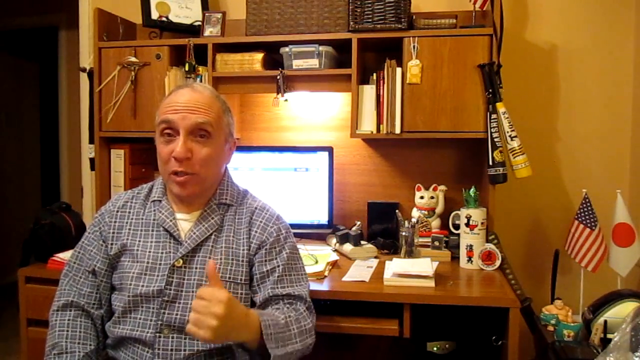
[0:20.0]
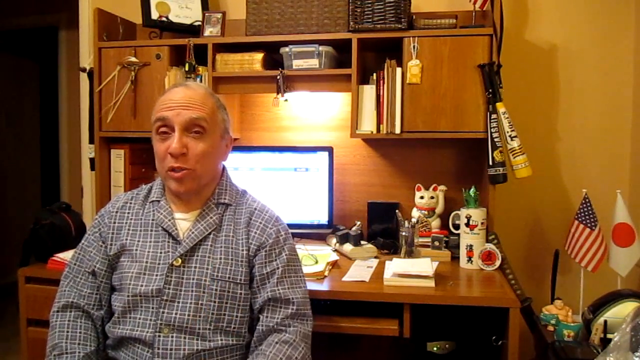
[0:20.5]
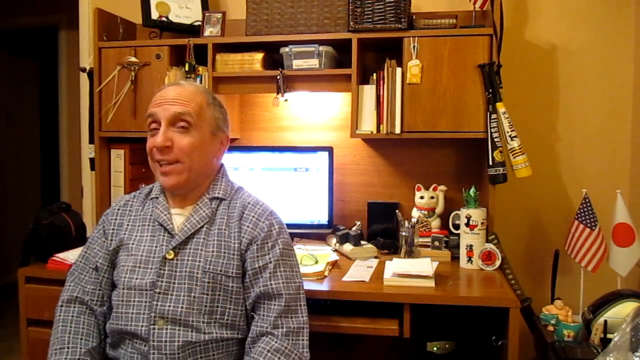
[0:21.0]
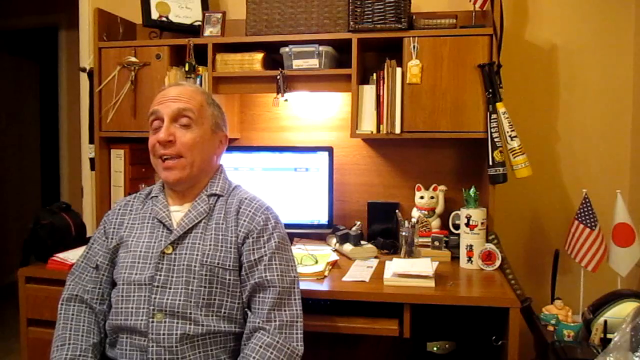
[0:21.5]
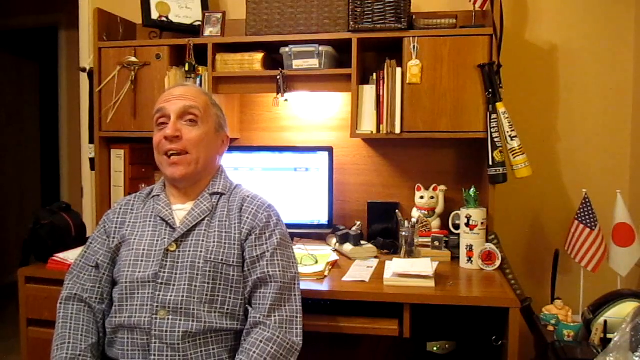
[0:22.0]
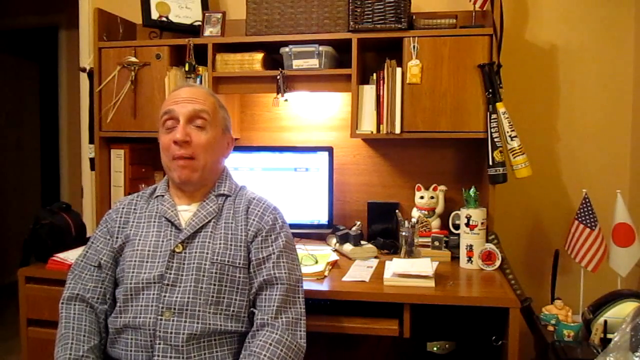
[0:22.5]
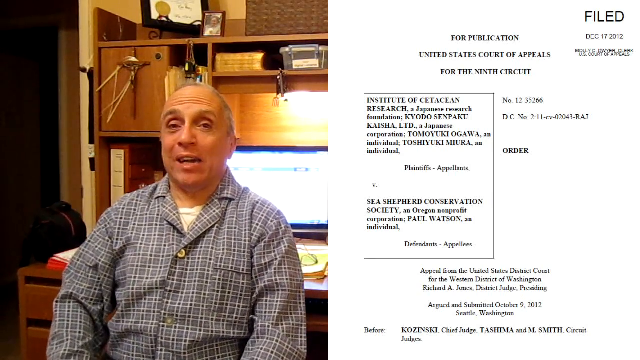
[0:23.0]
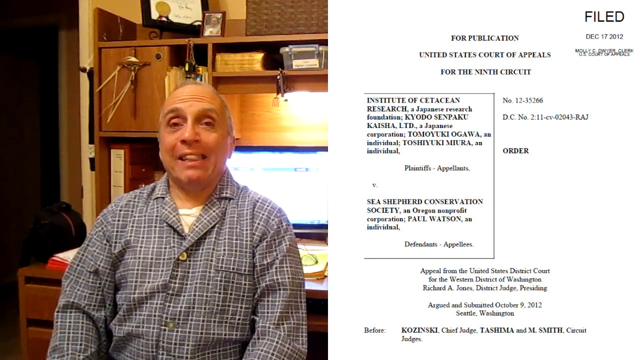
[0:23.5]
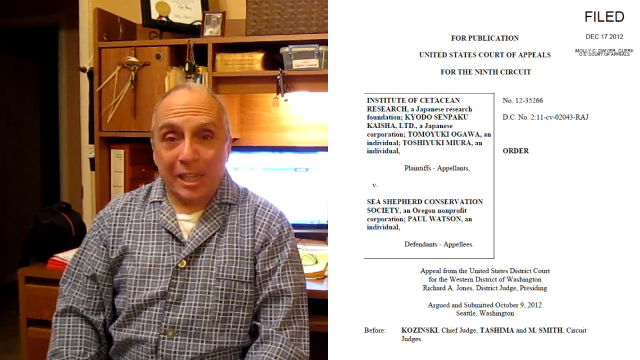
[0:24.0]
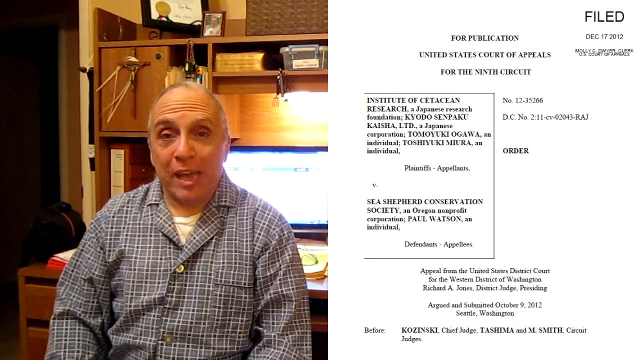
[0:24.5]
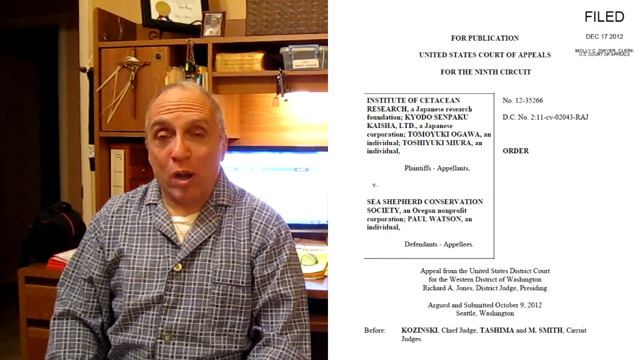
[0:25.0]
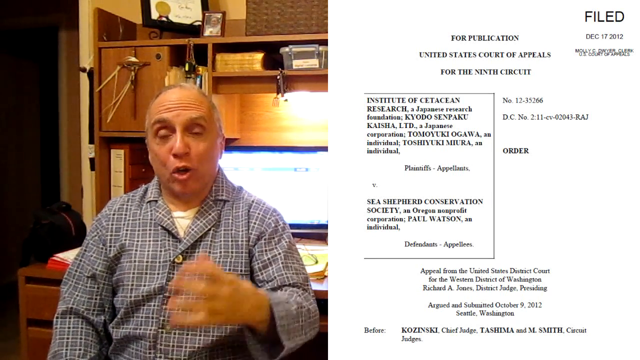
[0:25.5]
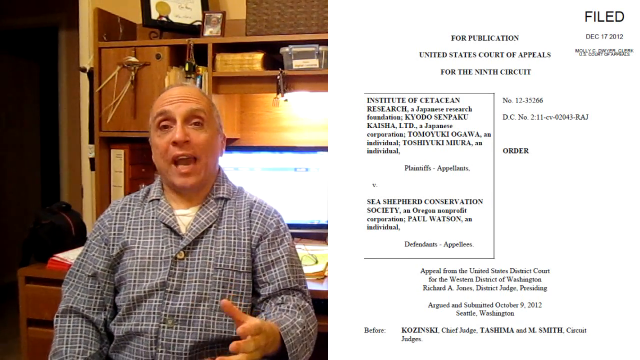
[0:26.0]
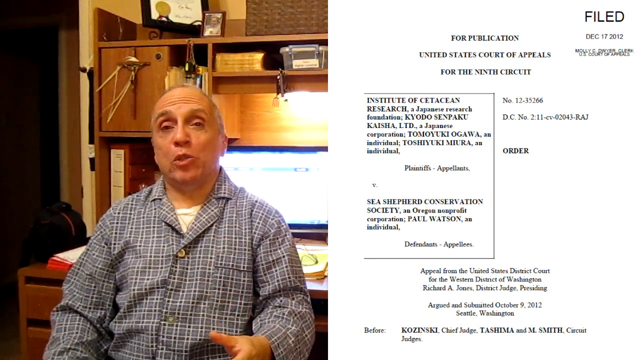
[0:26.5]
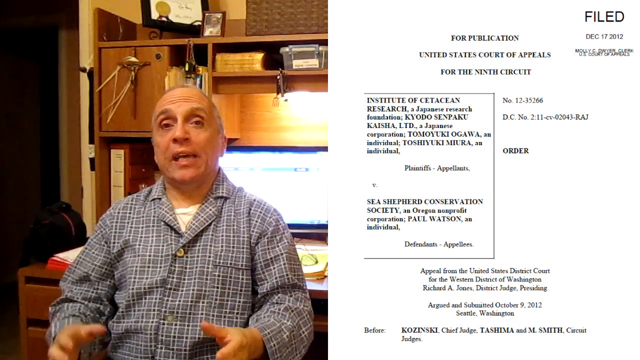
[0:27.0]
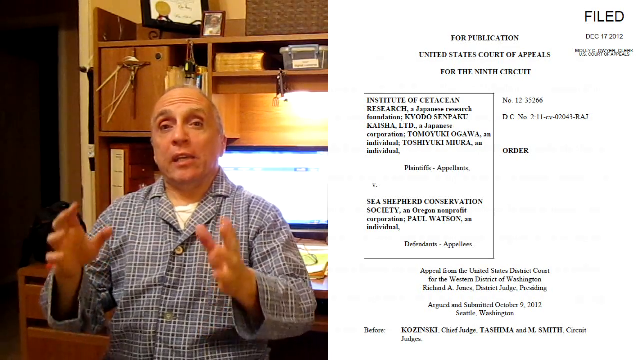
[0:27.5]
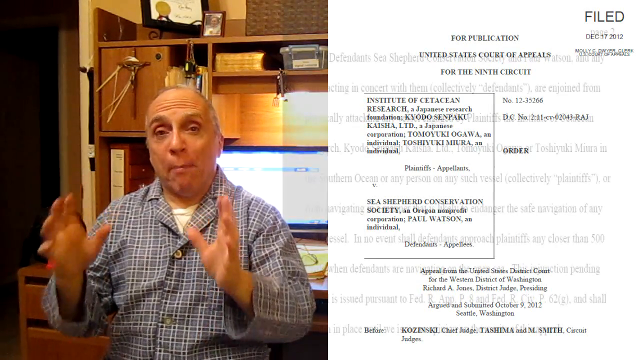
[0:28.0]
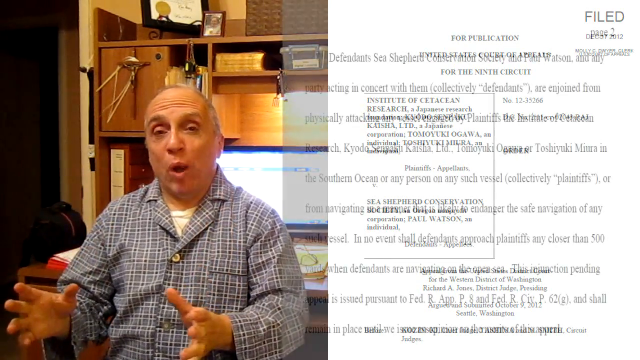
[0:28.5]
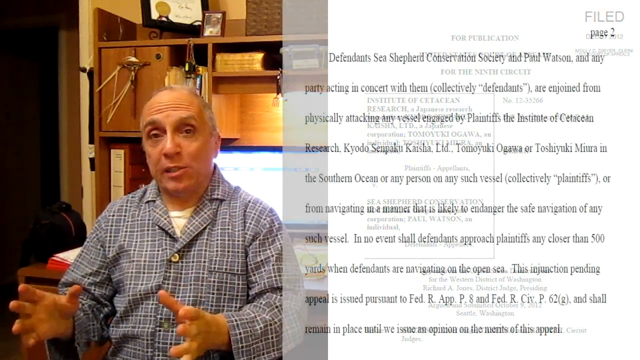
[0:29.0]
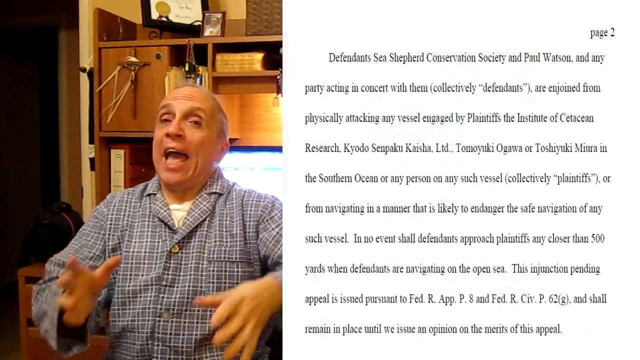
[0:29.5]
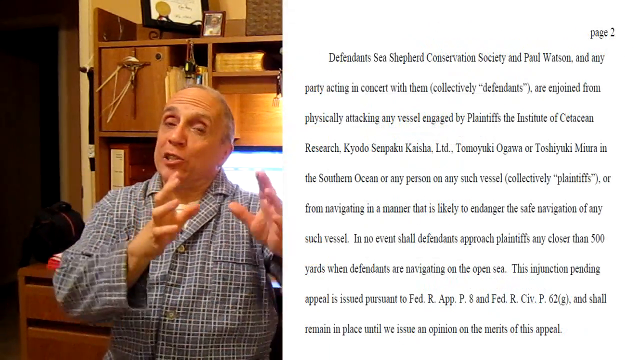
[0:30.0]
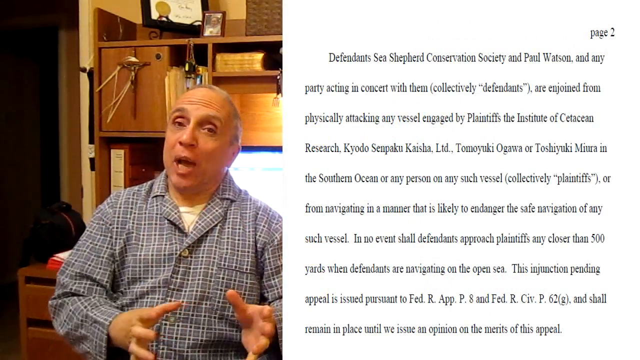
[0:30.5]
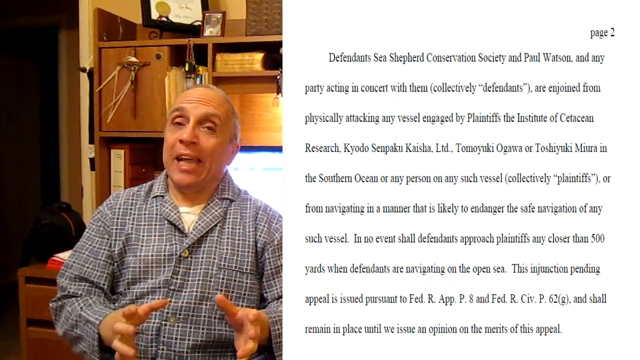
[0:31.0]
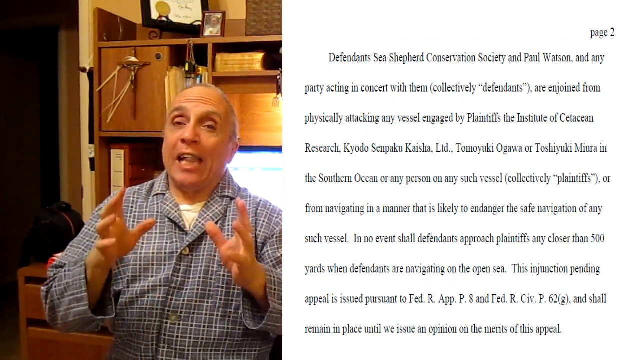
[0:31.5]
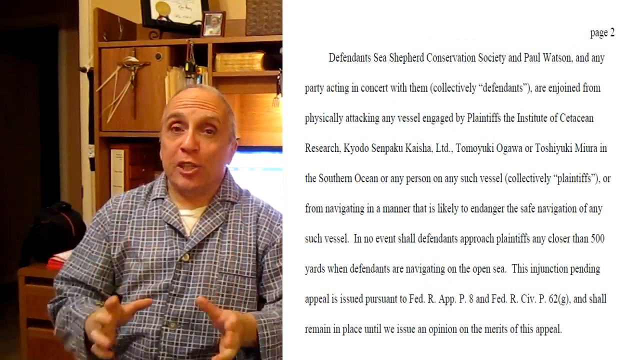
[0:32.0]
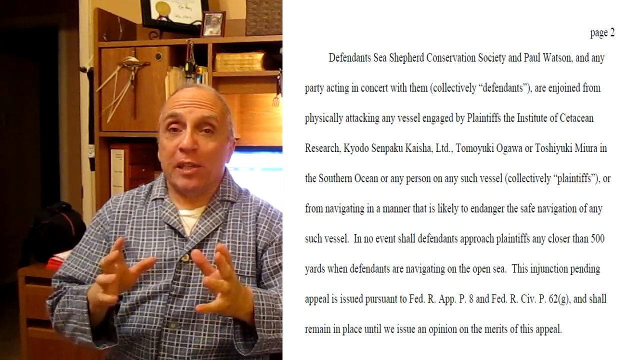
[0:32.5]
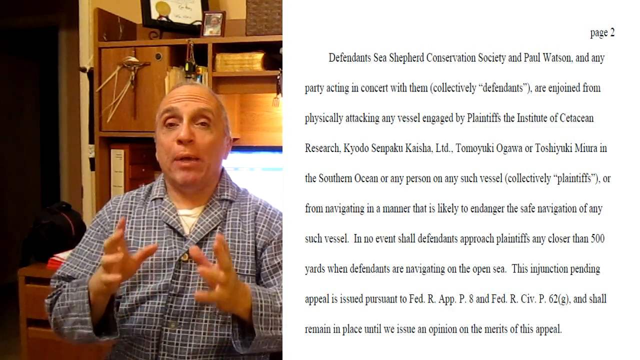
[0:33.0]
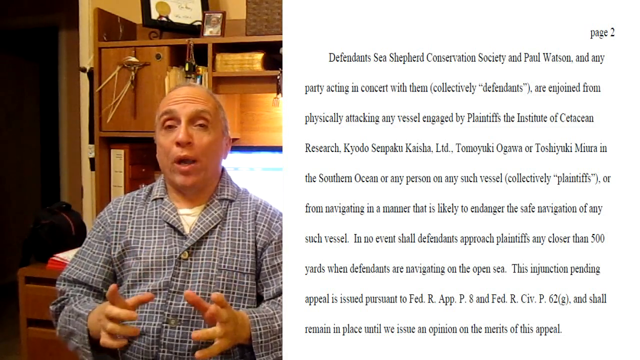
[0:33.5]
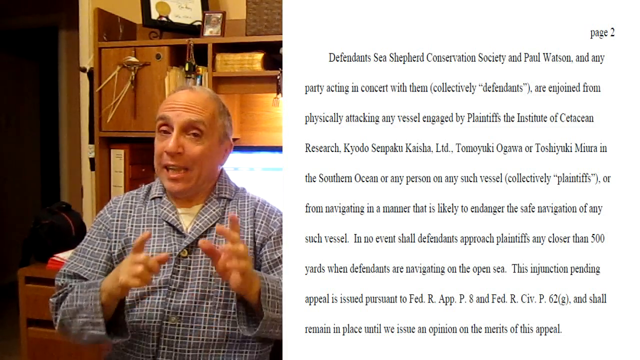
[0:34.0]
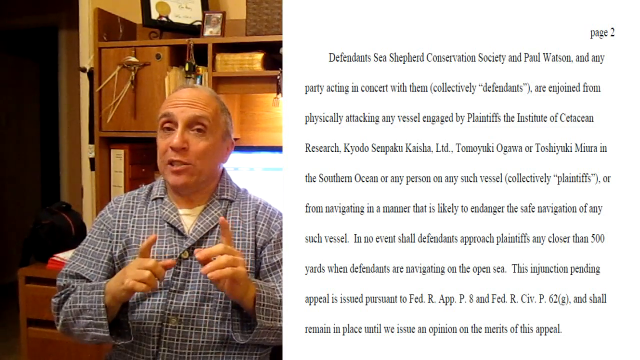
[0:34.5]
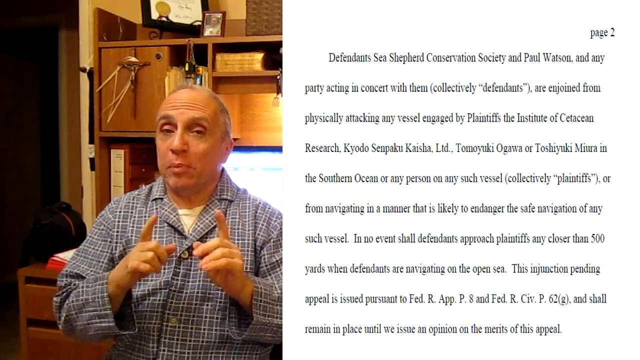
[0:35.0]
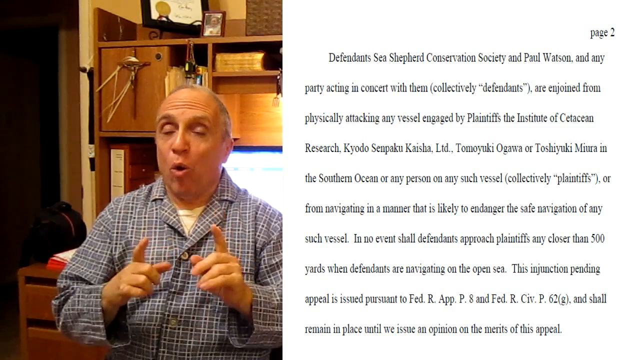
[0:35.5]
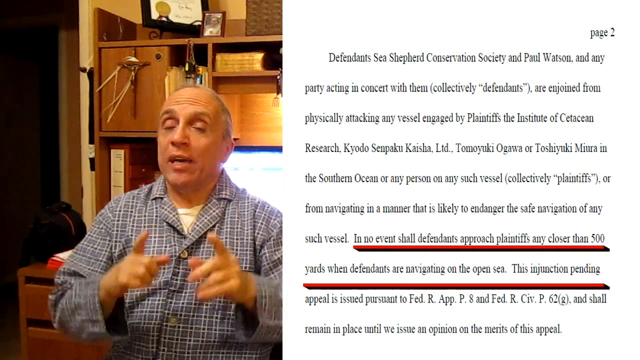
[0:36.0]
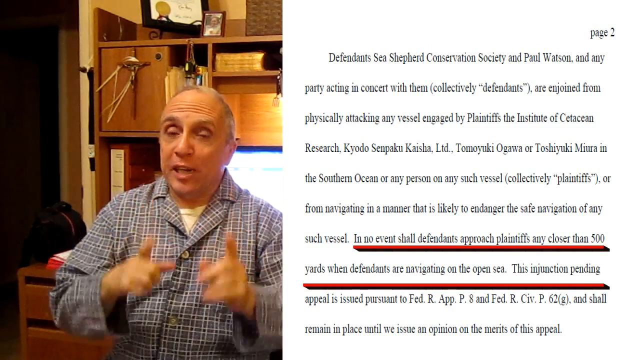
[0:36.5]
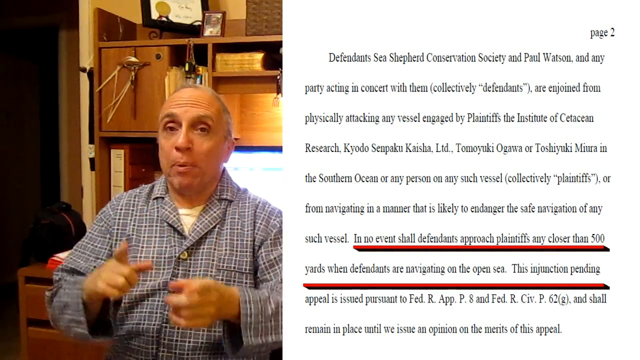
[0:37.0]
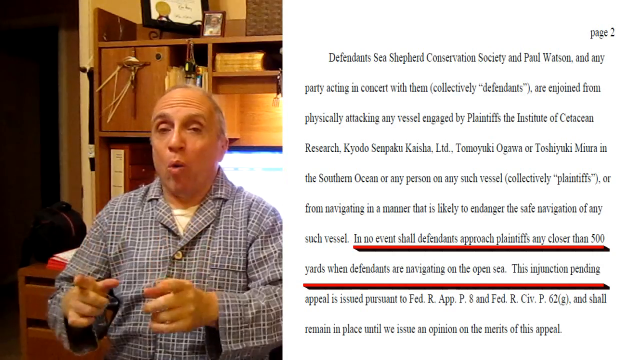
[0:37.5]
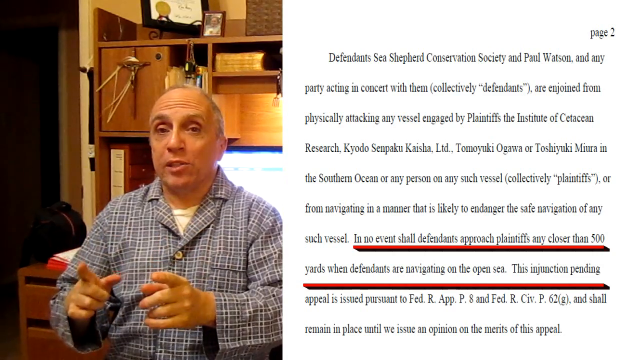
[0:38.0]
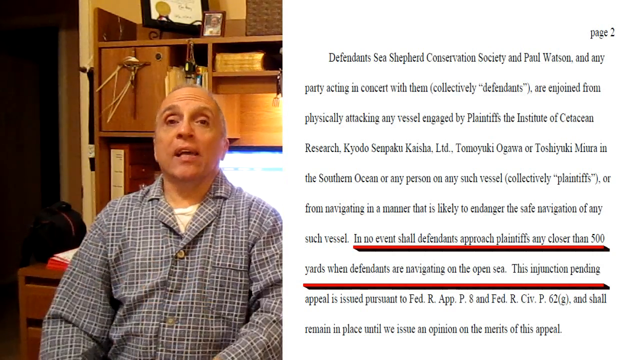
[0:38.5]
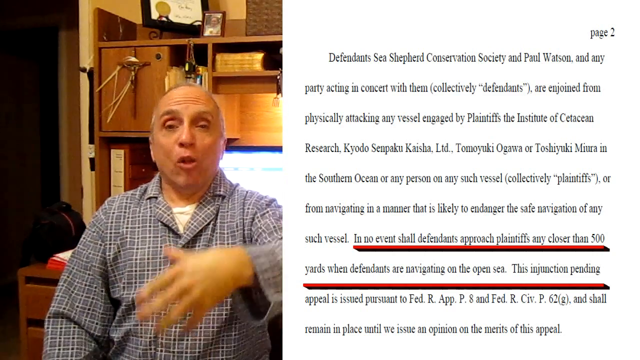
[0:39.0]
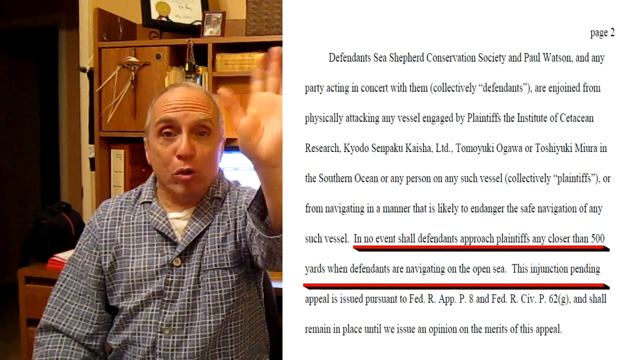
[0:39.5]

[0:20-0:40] The man still wears the same checkered shirt, and the setting is unchanged, but an application form appears on a page. The form seems to be for publication in the United States Court of Appeals and shows information about the court circuit along with other information. The screen then changes to a different page with defendant information, probably about a specific court case. Text that says "no eventual defendant shall approach" and some other information is underlined in red. The man remains in the same setting while the pages on the screen change.